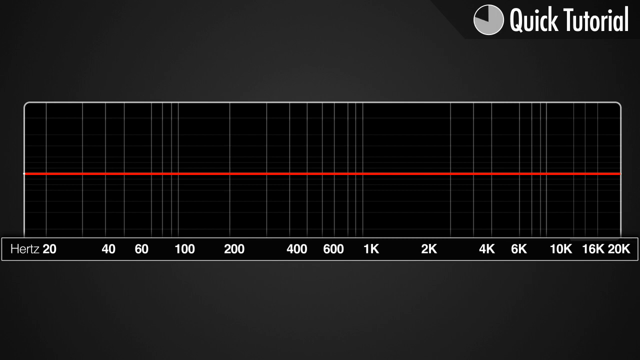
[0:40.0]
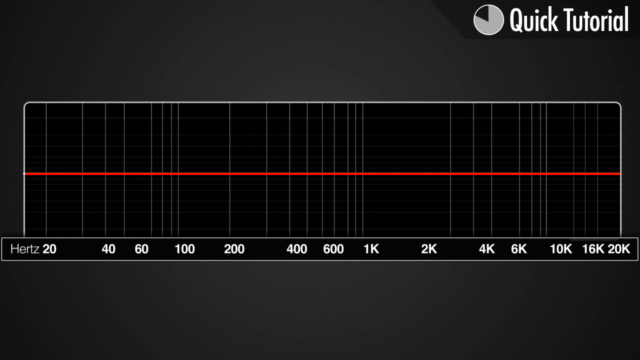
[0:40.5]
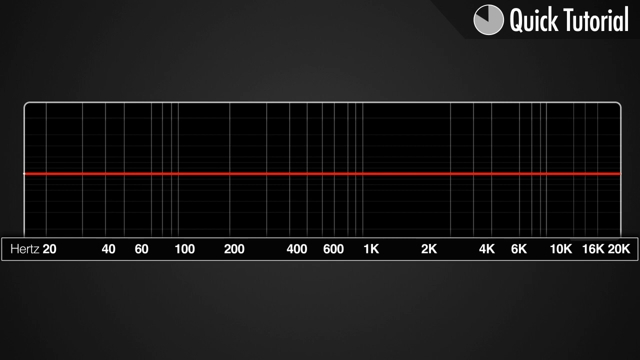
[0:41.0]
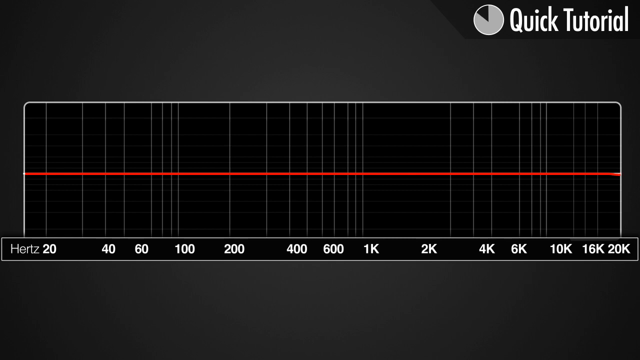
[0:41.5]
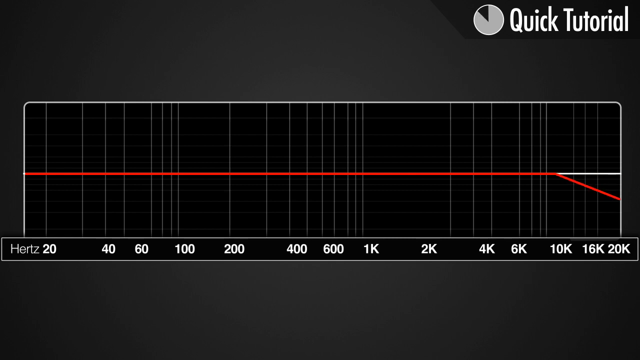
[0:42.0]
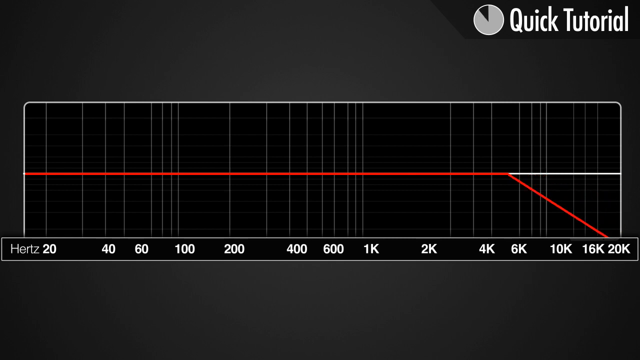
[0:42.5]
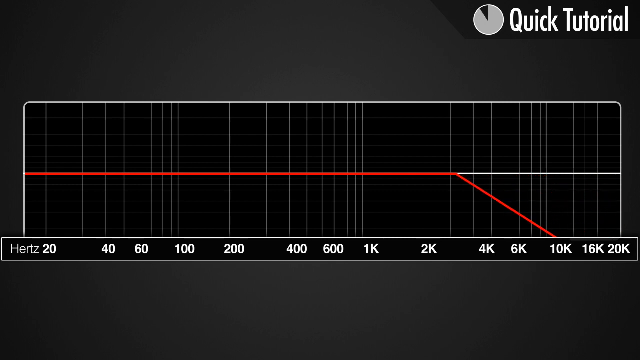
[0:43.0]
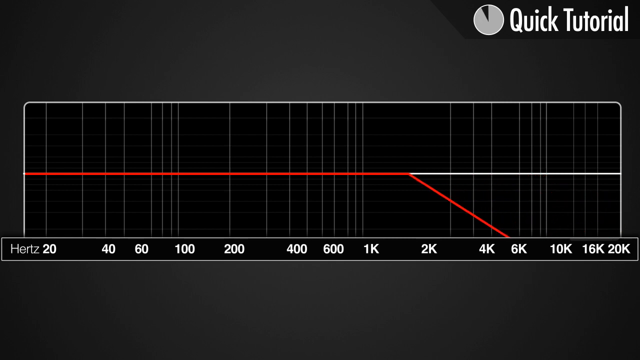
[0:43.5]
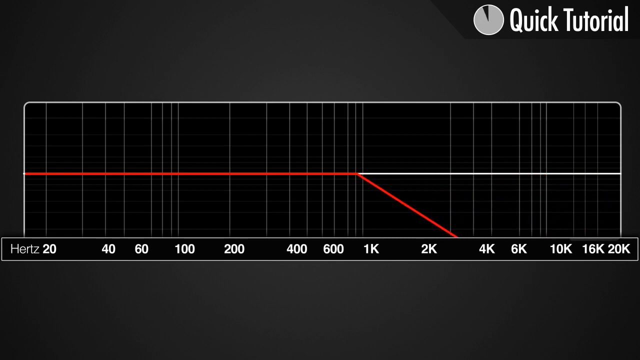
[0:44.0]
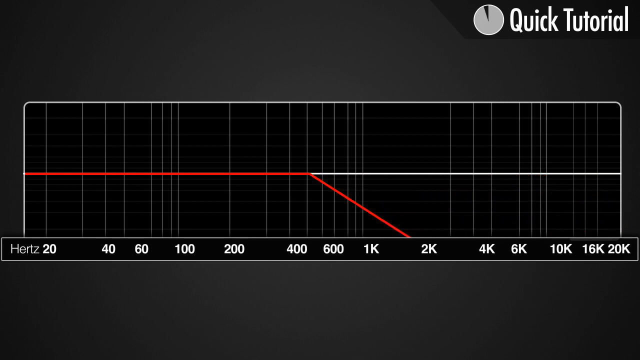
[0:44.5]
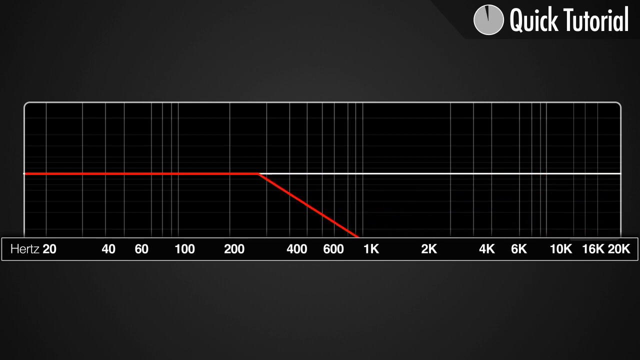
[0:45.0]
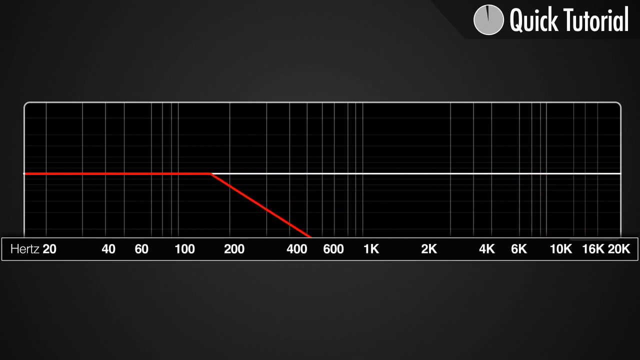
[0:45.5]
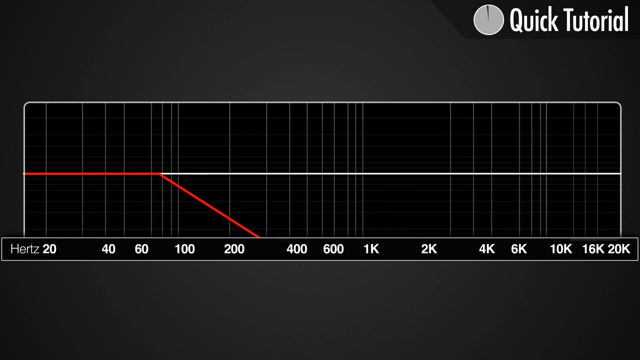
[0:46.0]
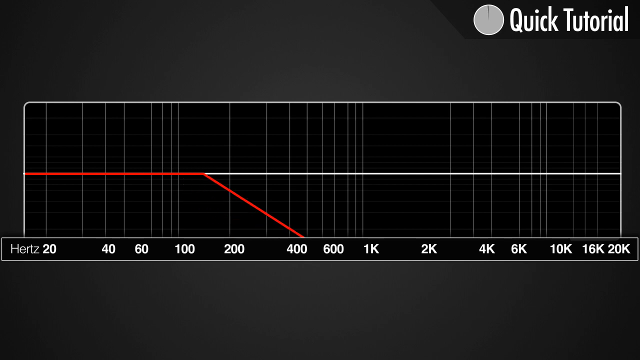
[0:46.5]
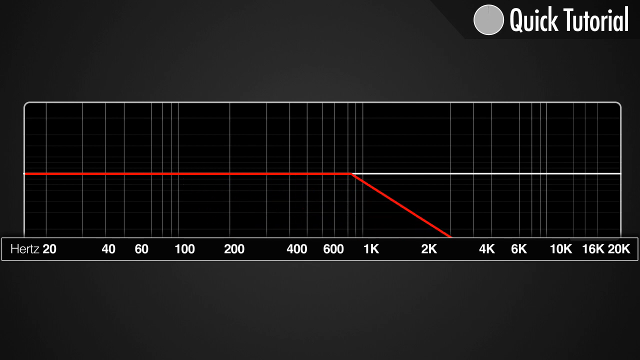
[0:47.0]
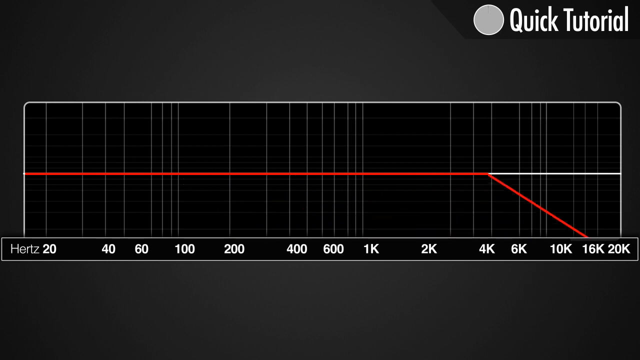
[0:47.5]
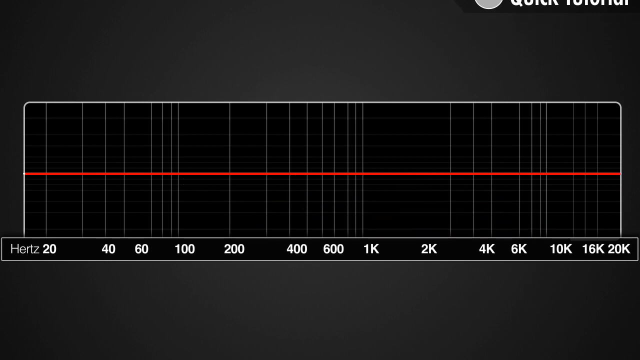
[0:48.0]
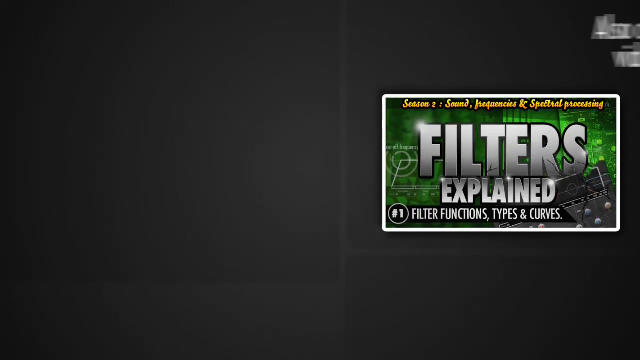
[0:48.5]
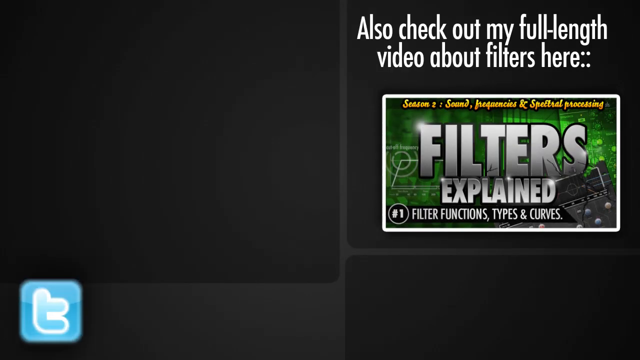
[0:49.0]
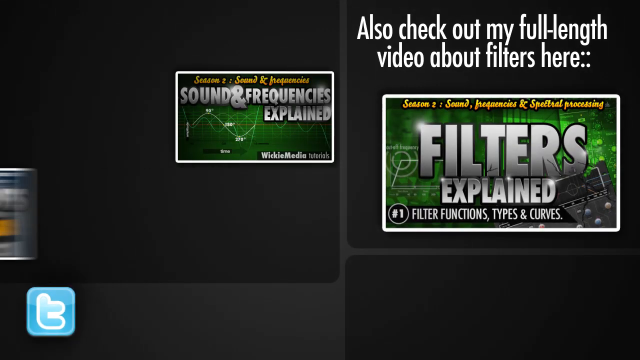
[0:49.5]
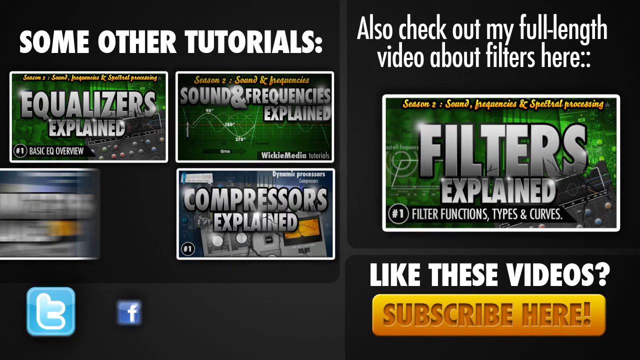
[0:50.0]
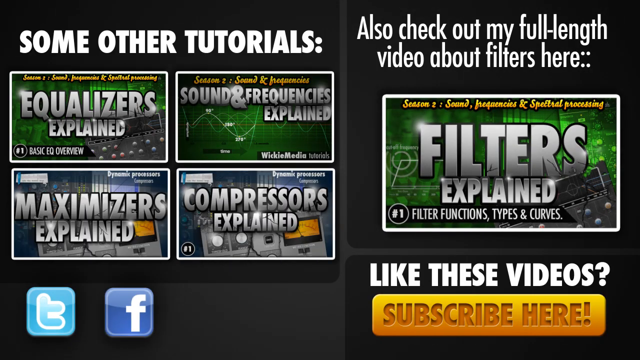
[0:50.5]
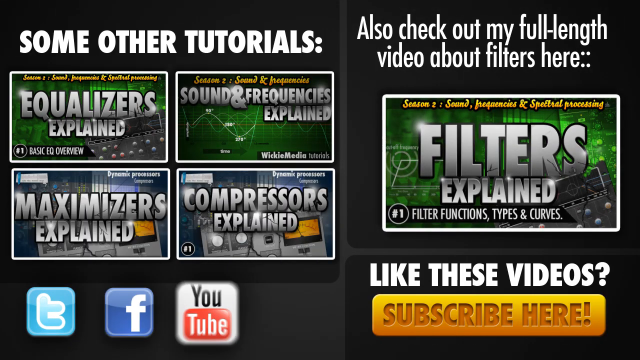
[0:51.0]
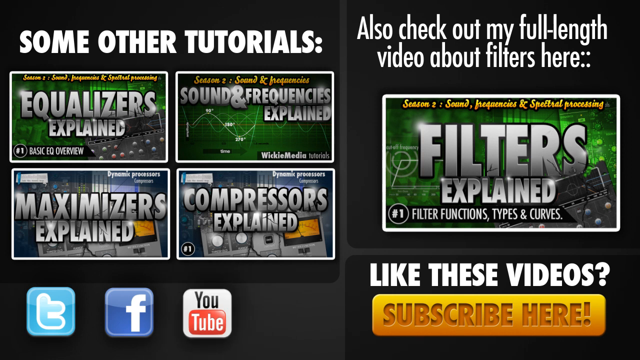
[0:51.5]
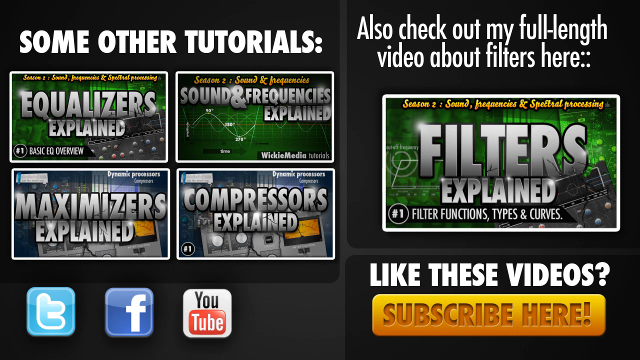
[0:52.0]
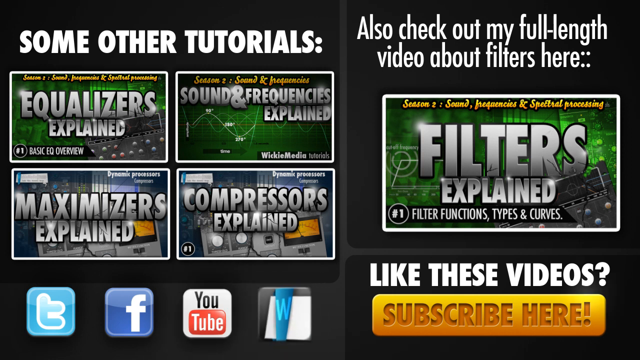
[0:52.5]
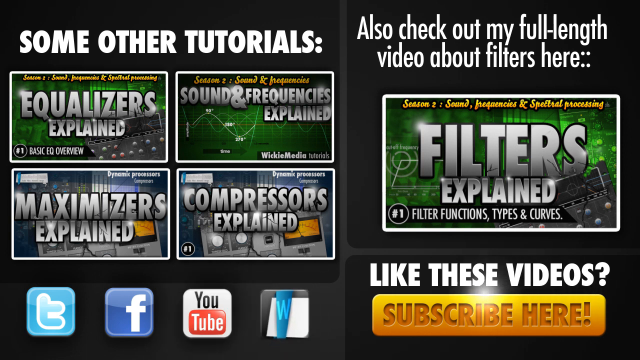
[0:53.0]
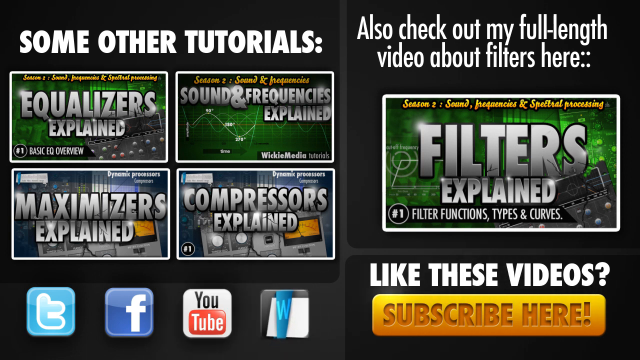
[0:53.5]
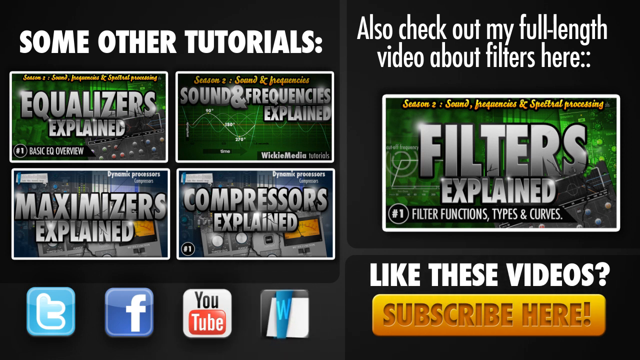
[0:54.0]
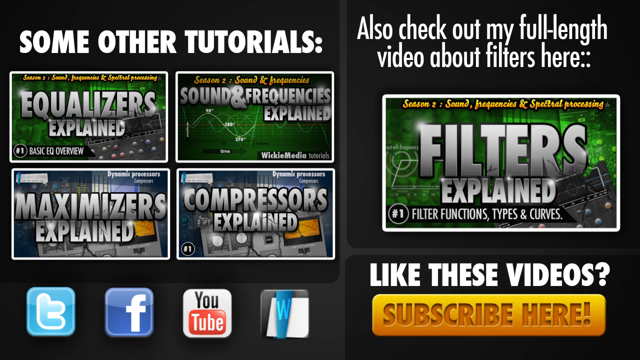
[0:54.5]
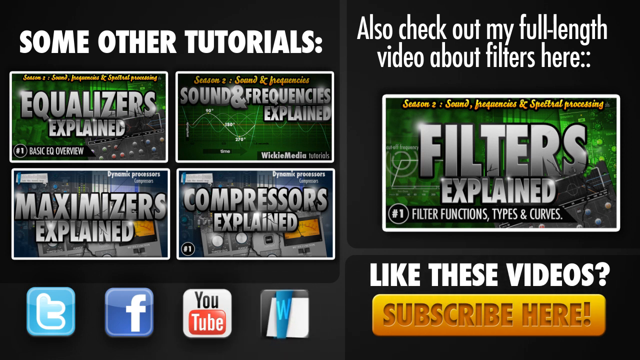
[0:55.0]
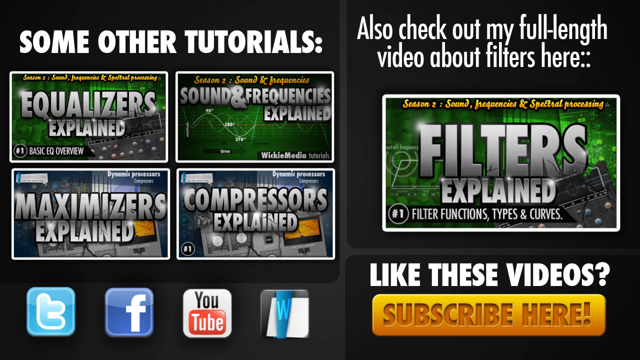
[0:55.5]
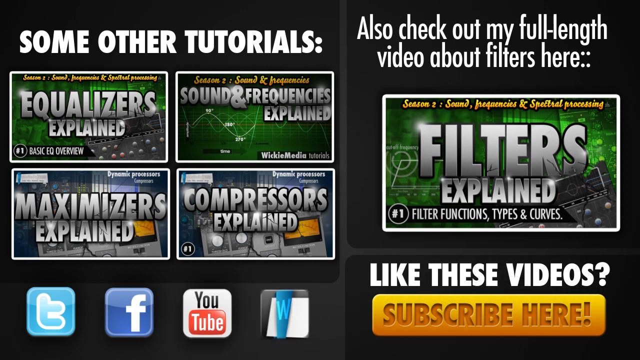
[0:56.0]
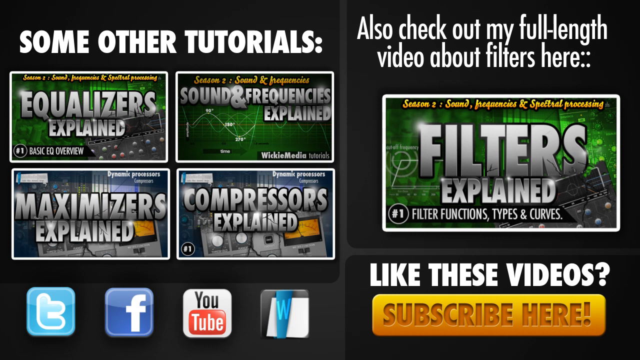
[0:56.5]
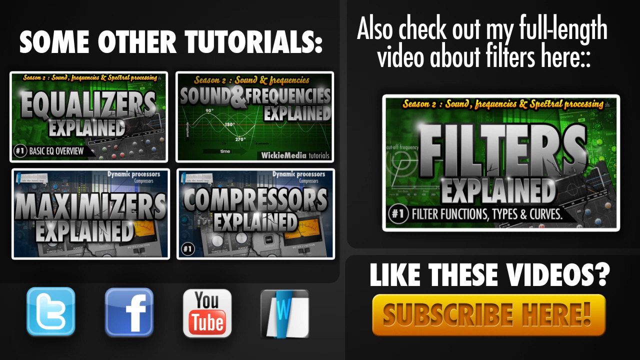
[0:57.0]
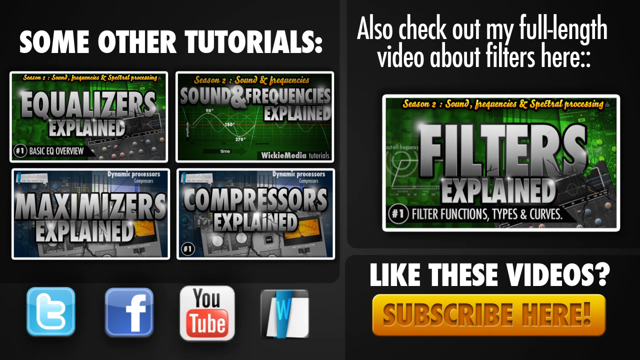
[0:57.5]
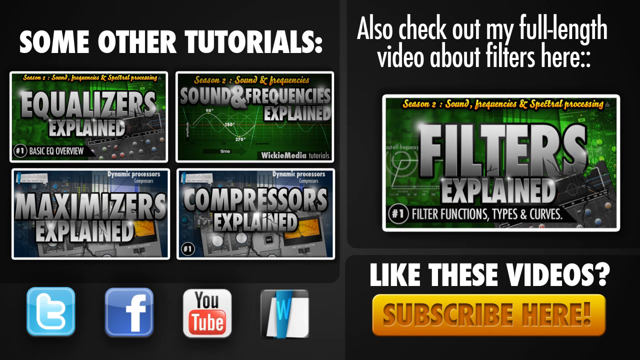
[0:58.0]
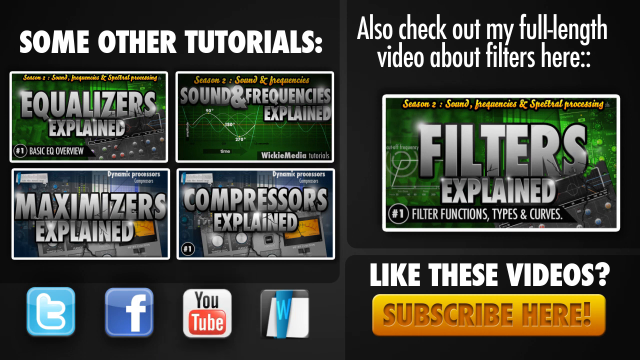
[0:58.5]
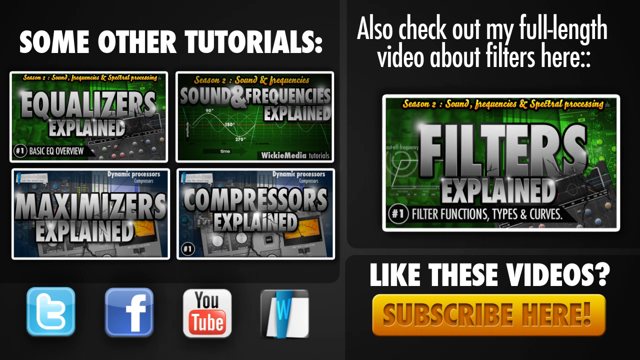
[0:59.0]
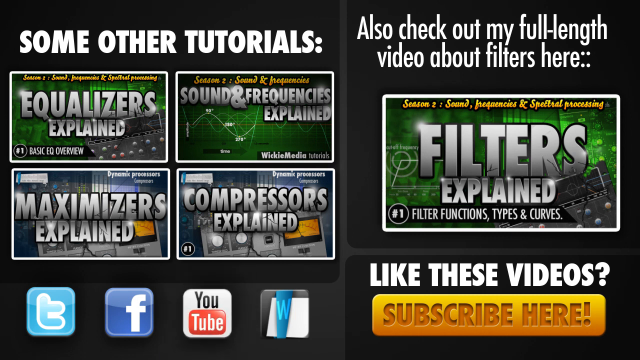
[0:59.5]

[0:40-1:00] The red point slides along the line, and as it does the line branches down to the right again, dragging down across the bottom at an angle. It slides all the way across to about 60, then goes all the way back to the right side, making the whole line red again. The scene changes to a black background with "Some other tutorials" in bold white on the left side and four rectangles under it: the top left reads "Equalizers explained," the one to its right "Sound and frequencies explained," the one below left "Maximizers explained," and the one to its right "Compressors explained," with gray over the videos. To the right is a bigger one labeled "Filters explained," and above it white text reads "Also check out my full-length videos about filters here." Below the Filters Explained video is "Like these videos," followed by a yellow Subscribe button reading "Subscribe here" in red. In the bottom left are a Twitter icon, a Facebook icon, a YouTube icon and an icon with a W in it.